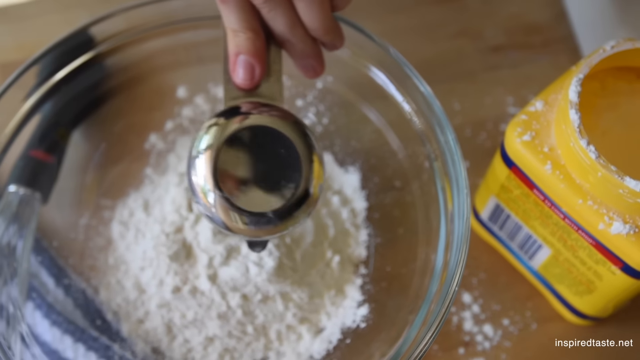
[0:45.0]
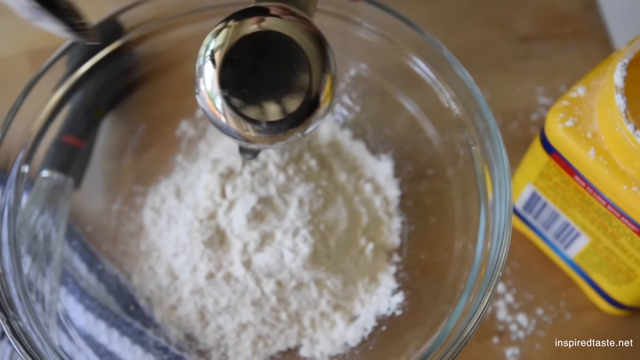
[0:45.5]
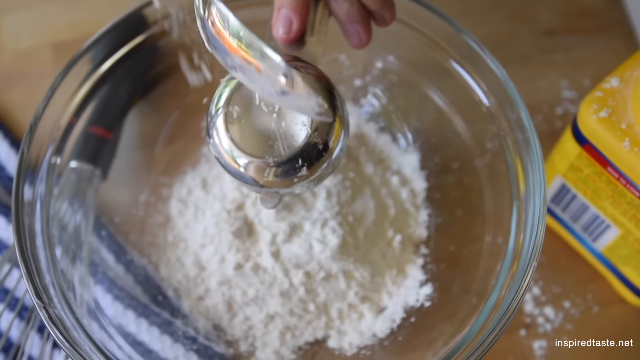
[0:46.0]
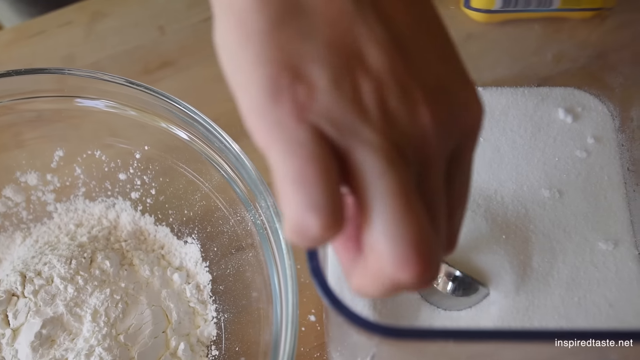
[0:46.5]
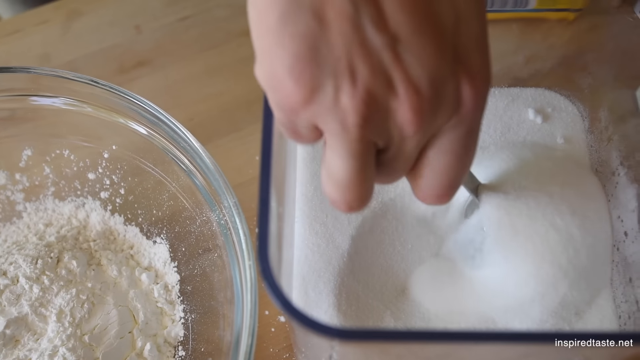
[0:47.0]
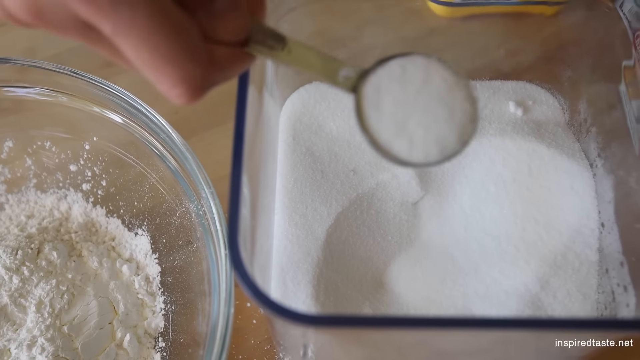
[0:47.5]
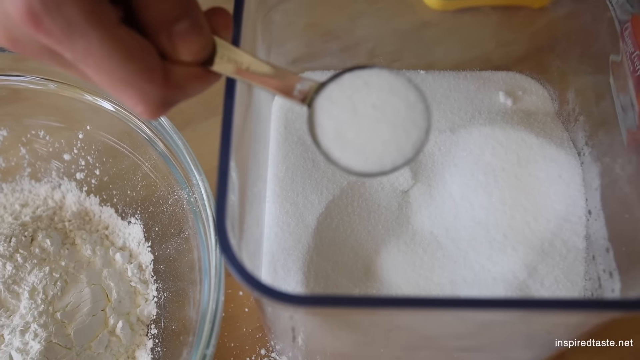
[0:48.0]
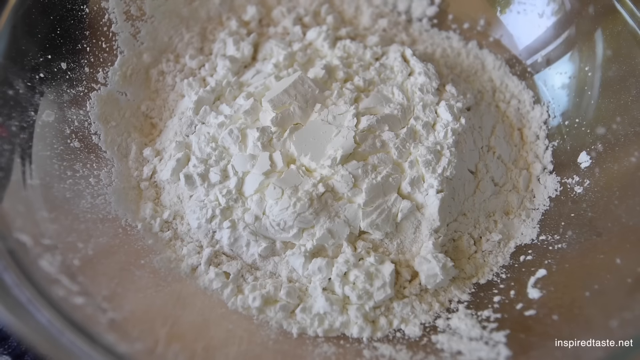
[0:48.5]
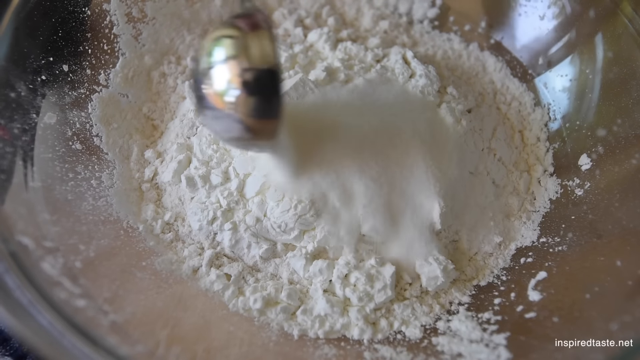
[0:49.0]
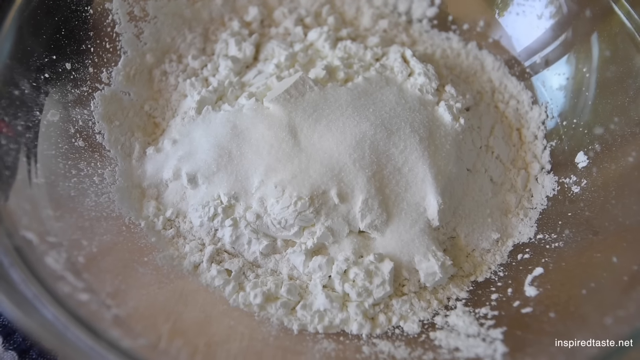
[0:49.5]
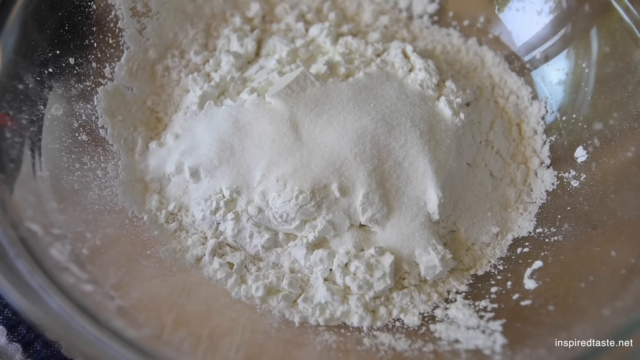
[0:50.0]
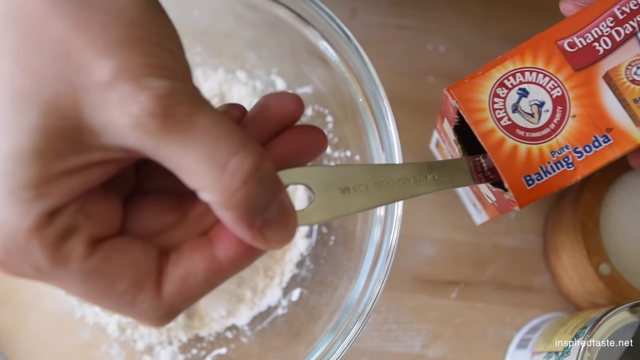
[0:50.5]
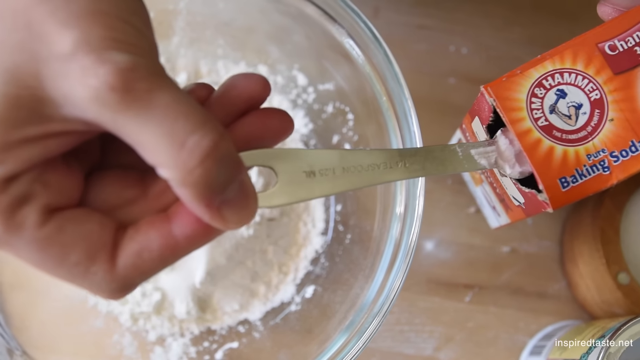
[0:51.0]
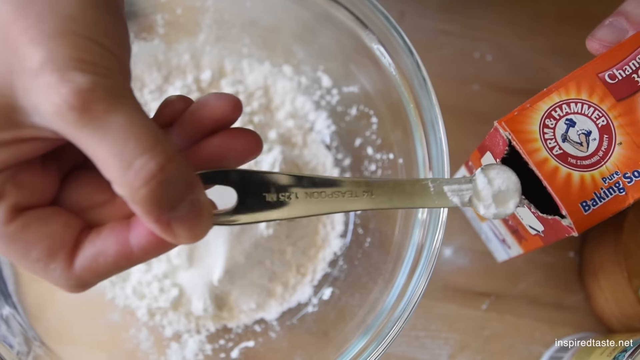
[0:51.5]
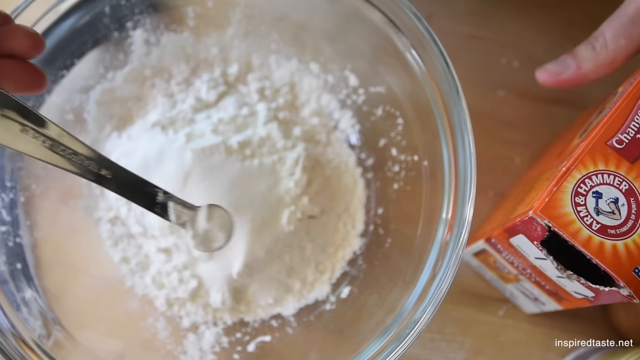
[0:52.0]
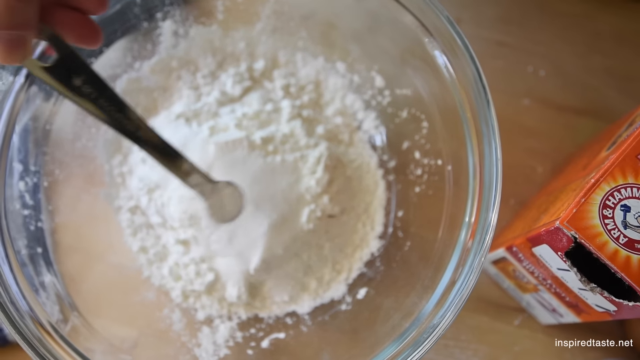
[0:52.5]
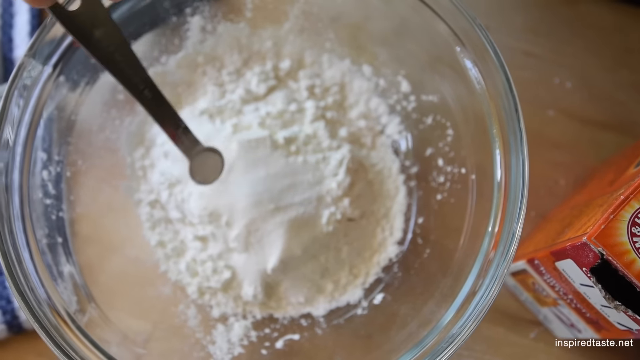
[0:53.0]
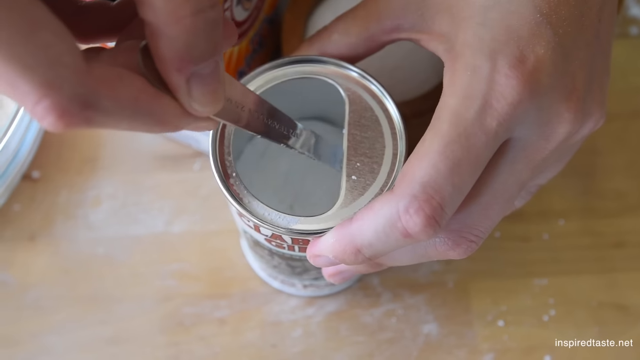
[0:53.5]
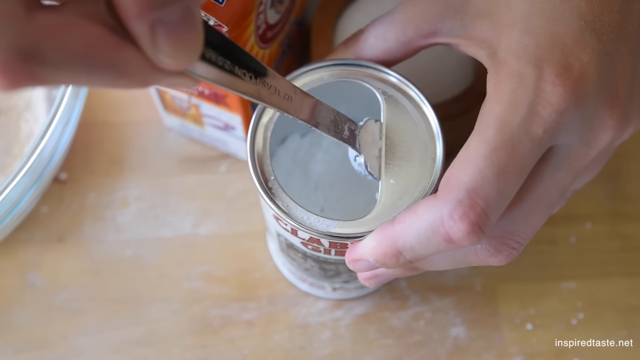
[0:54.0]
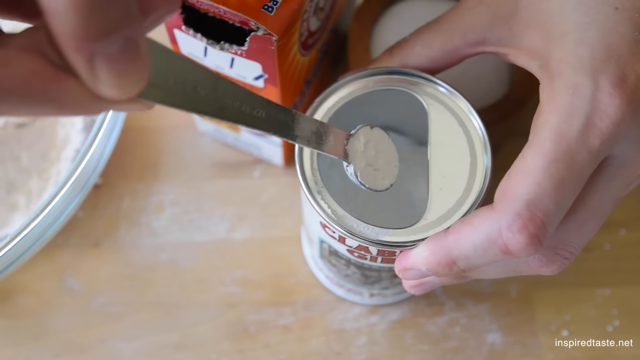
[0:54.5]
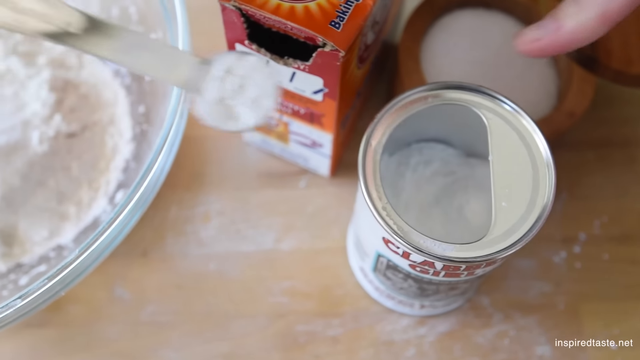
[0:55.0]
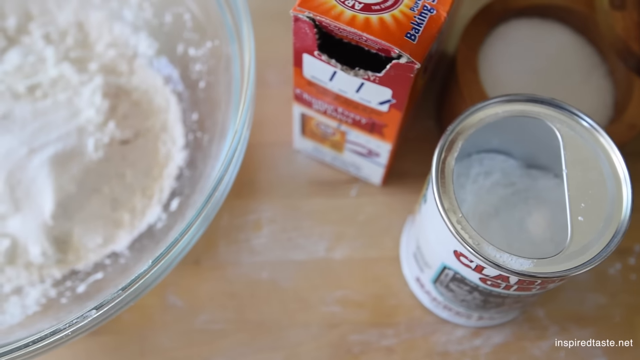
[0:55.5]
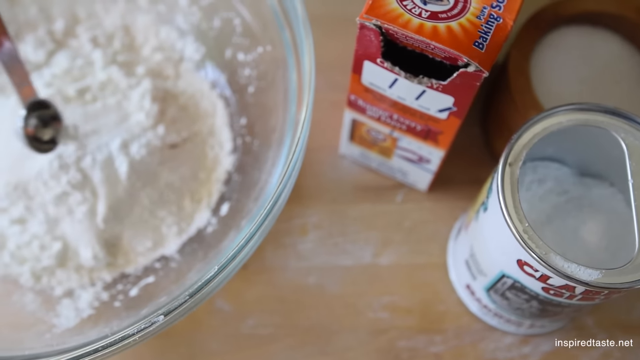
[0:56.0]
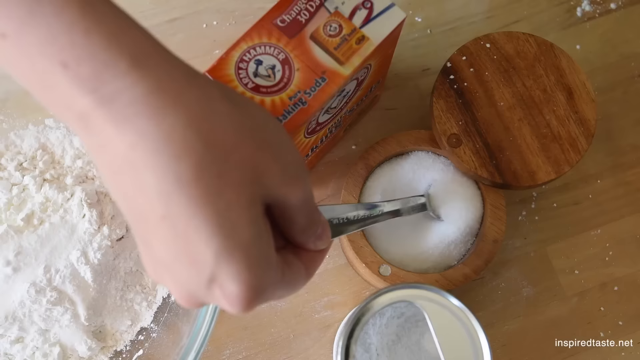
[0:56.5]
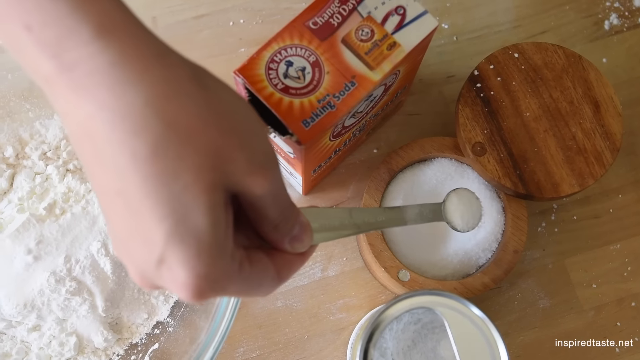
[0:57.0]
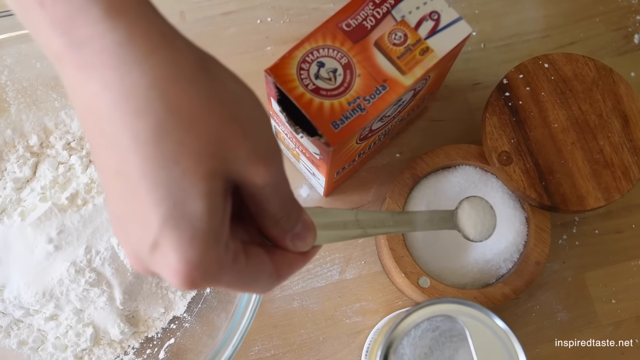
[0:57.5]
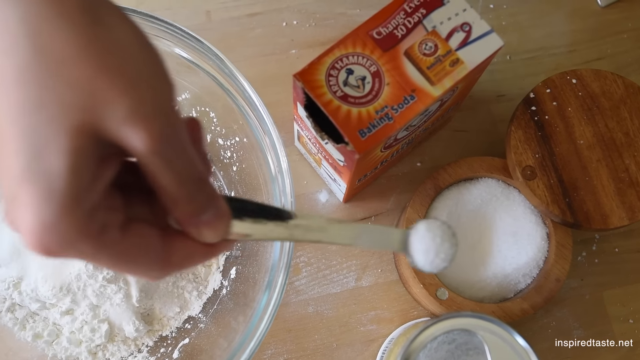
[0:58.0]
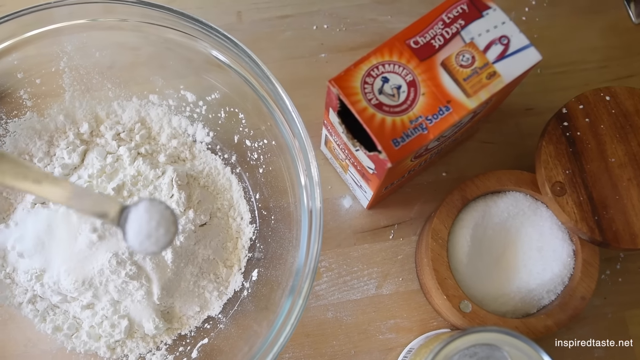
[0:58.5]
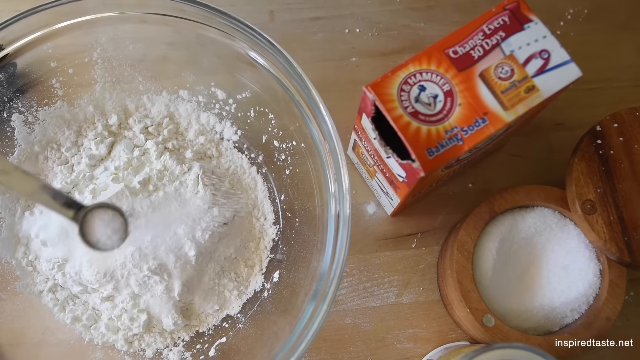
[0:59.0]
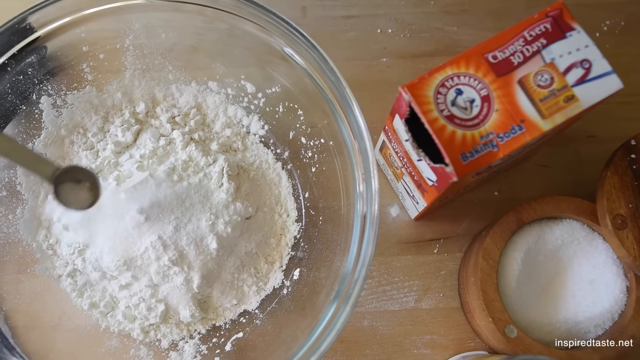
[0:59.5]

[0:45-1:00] The title "Easy Crispy Waffles recipe" appears in the top left, along with watch later and share options. After play is pressed, baking powder and then sugar are poured into a clear glass bowl, followed by baking soda, and what looks like salt is added with tiny measuring spoons. The person adds everything with their left hand, shaking the salt and the sugar across the top of the bowl. Some of the dry ingredients spill, leaving grains of salt and little bits of flour on the counter. As the camera scans, a little of the area to the left of the bowl is visible.